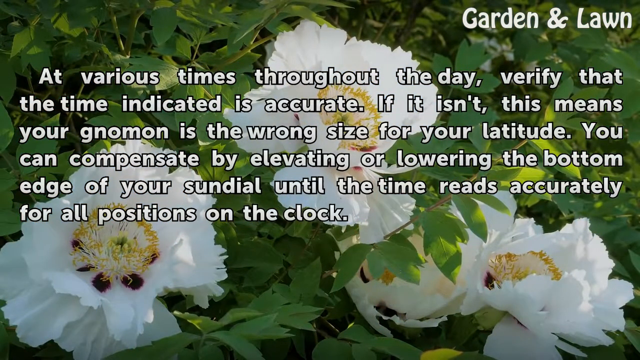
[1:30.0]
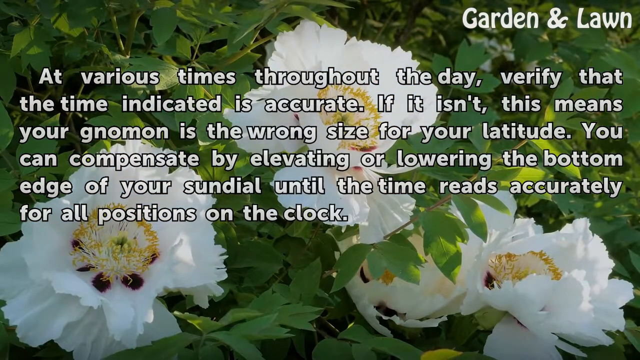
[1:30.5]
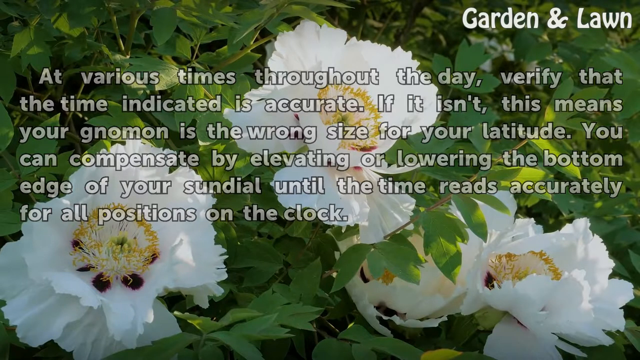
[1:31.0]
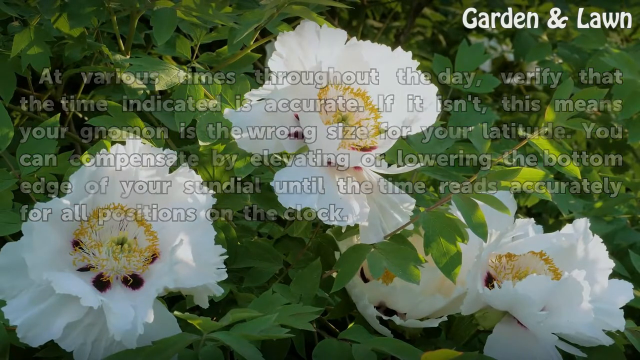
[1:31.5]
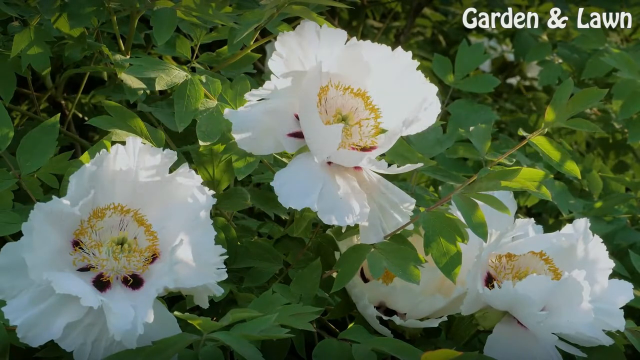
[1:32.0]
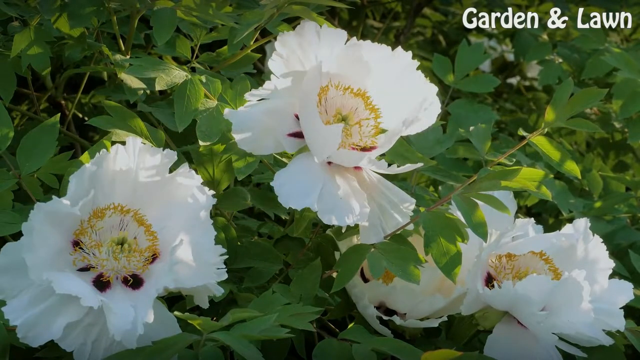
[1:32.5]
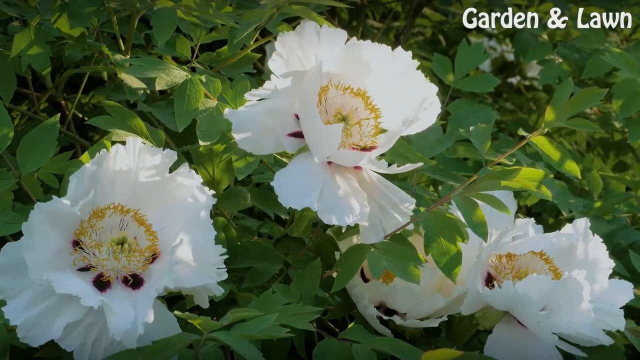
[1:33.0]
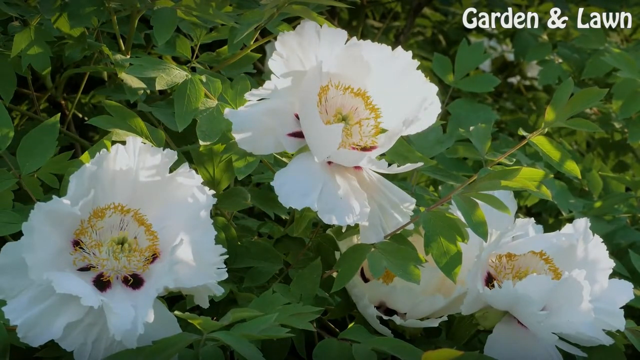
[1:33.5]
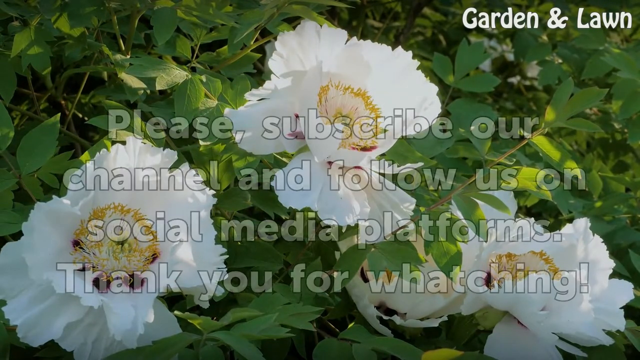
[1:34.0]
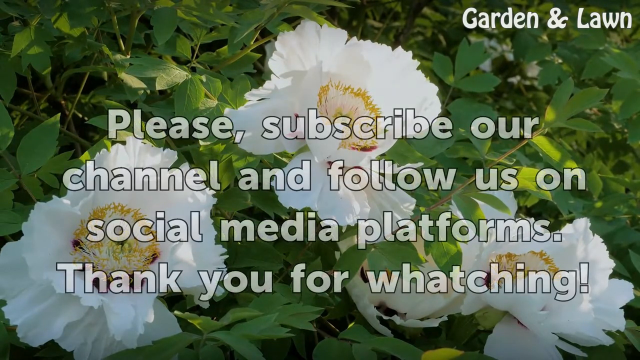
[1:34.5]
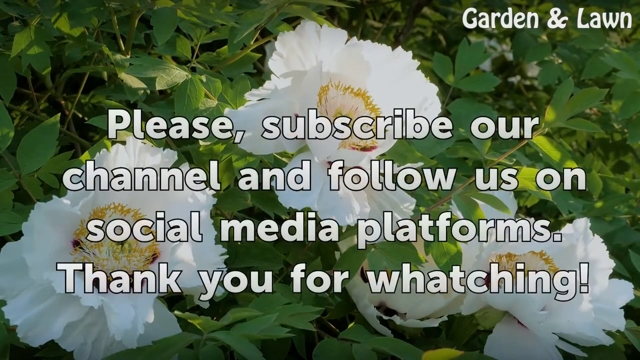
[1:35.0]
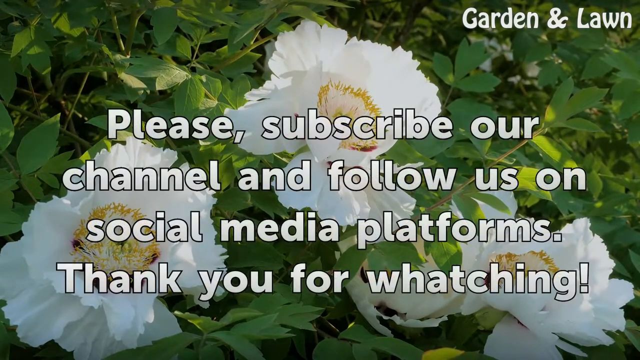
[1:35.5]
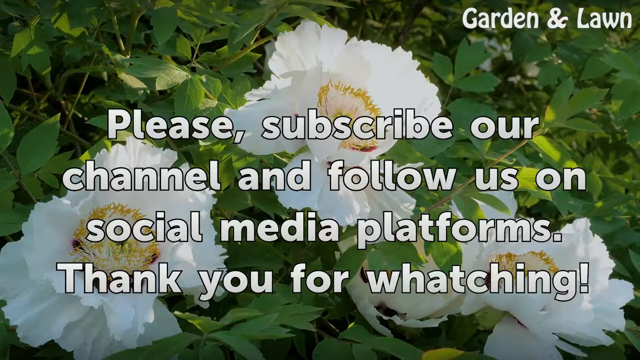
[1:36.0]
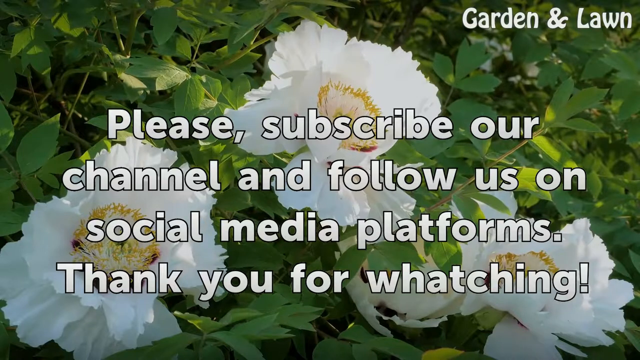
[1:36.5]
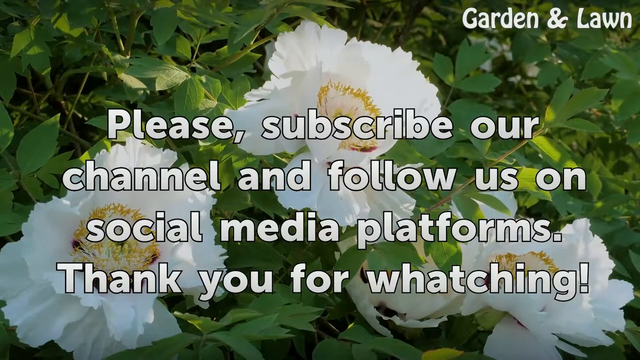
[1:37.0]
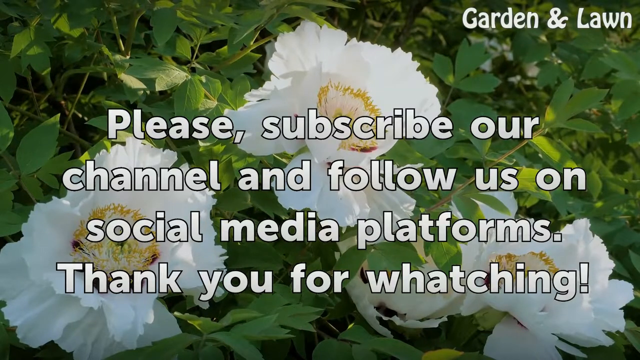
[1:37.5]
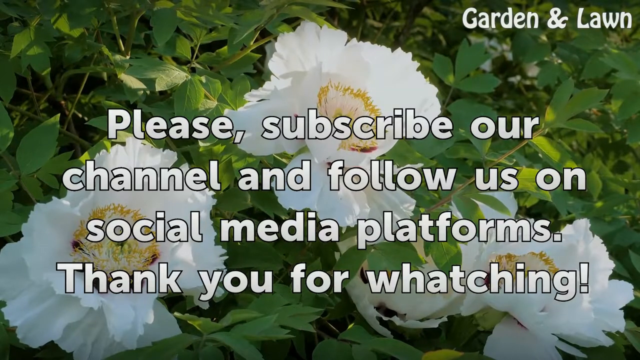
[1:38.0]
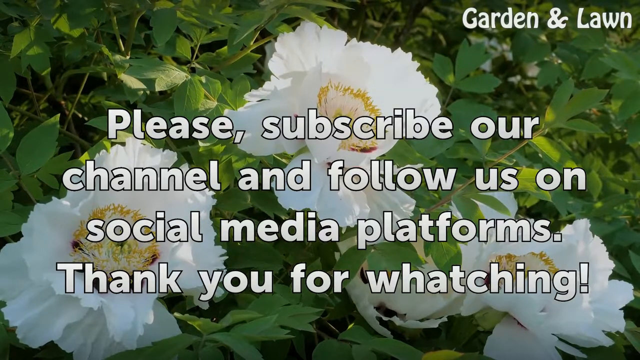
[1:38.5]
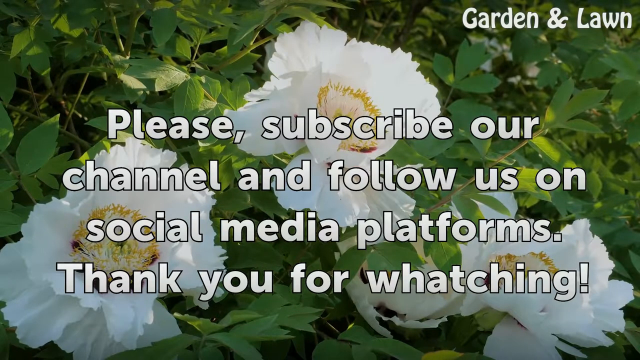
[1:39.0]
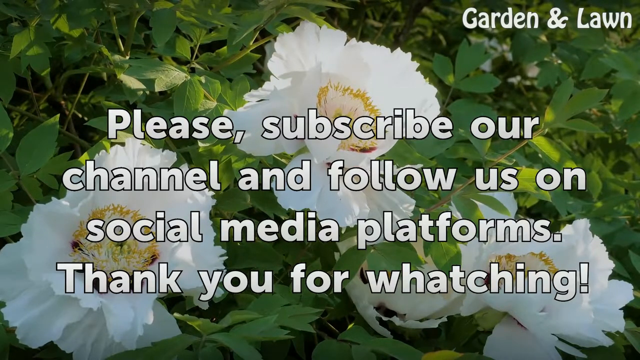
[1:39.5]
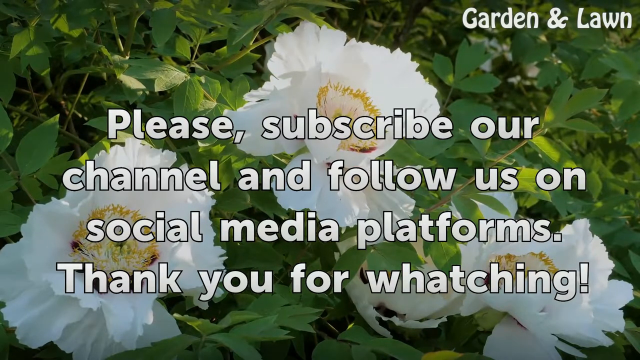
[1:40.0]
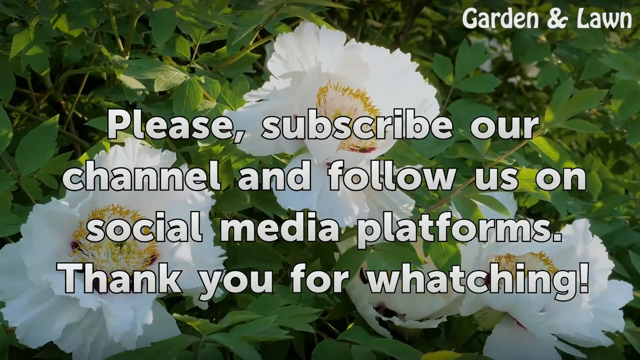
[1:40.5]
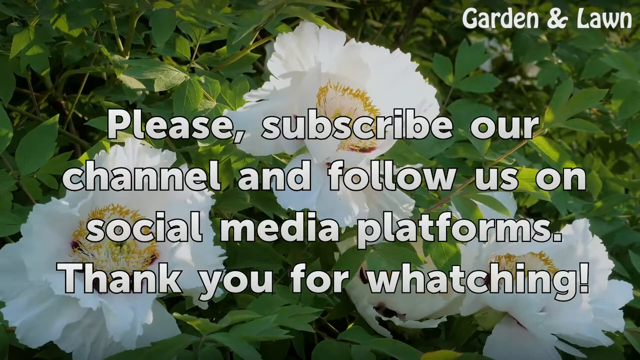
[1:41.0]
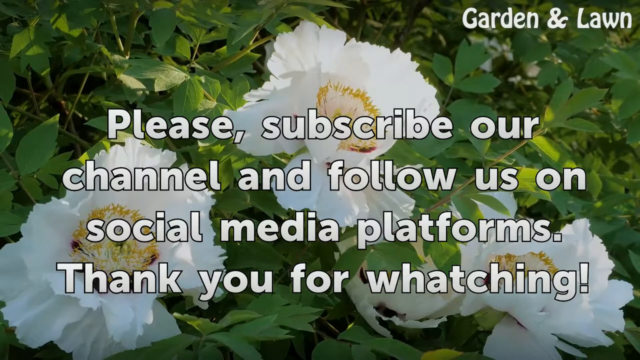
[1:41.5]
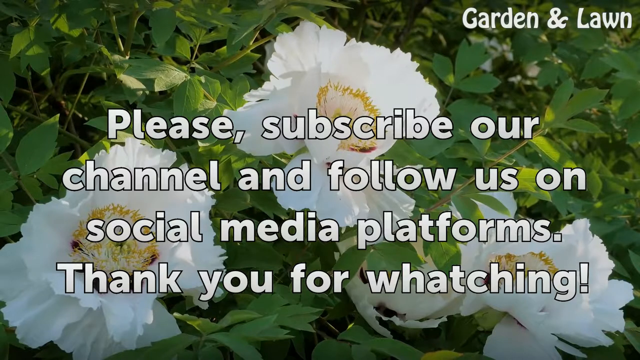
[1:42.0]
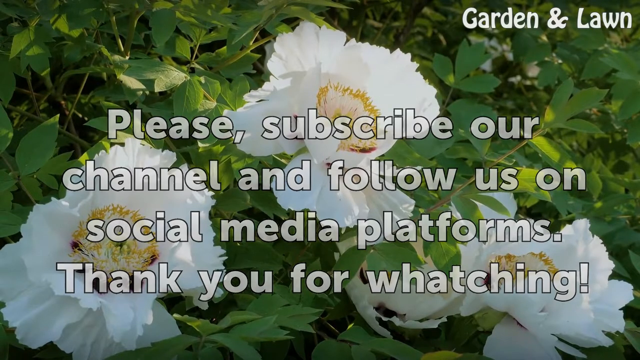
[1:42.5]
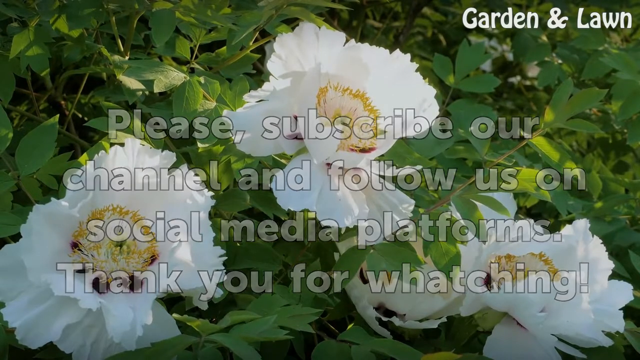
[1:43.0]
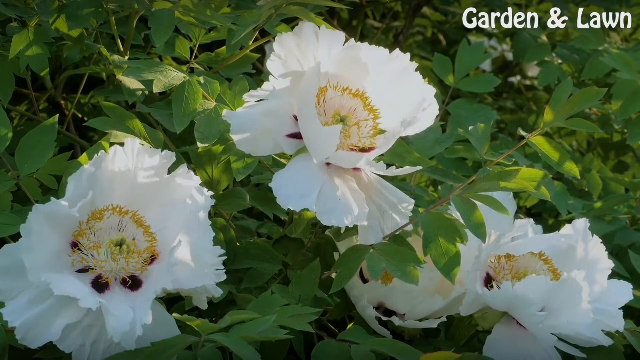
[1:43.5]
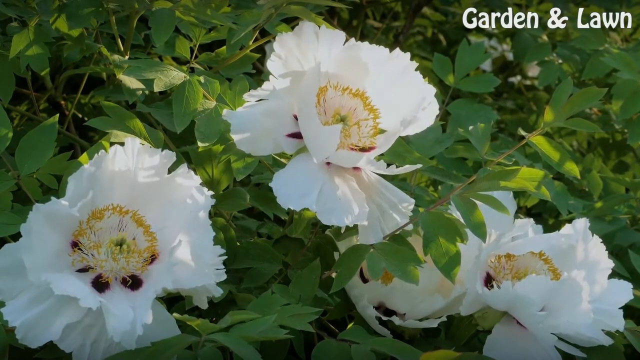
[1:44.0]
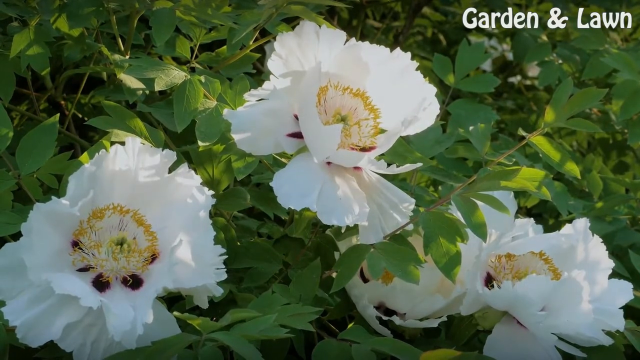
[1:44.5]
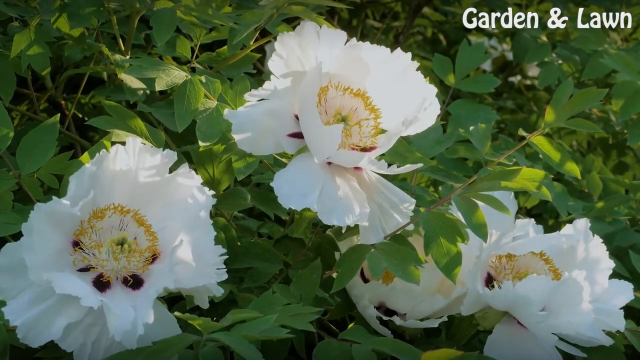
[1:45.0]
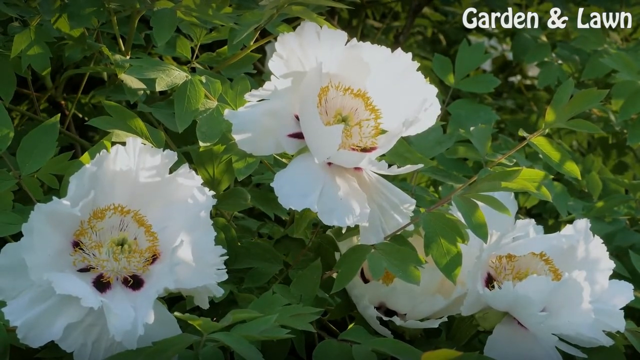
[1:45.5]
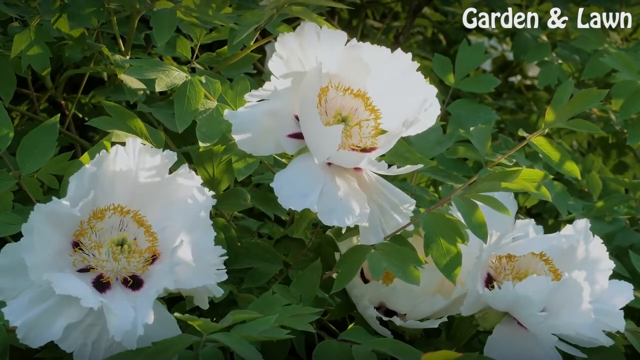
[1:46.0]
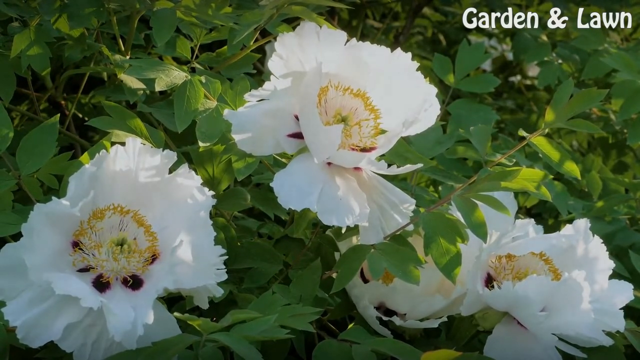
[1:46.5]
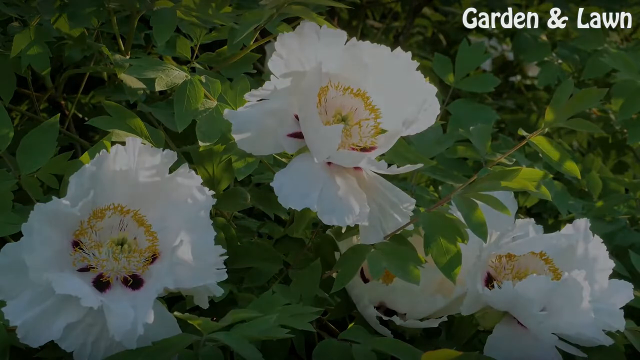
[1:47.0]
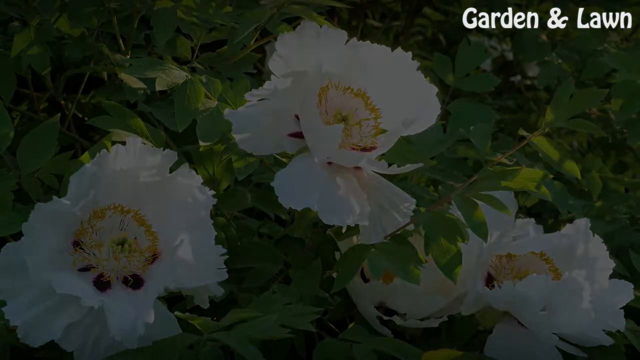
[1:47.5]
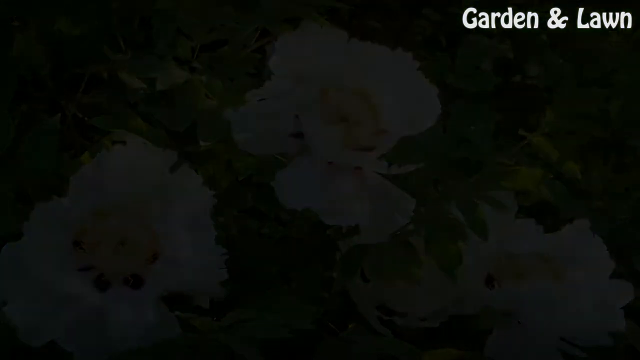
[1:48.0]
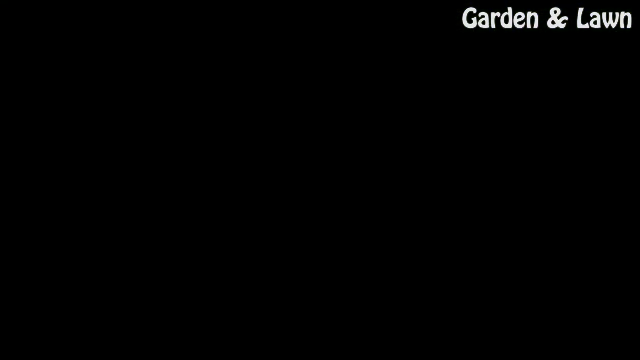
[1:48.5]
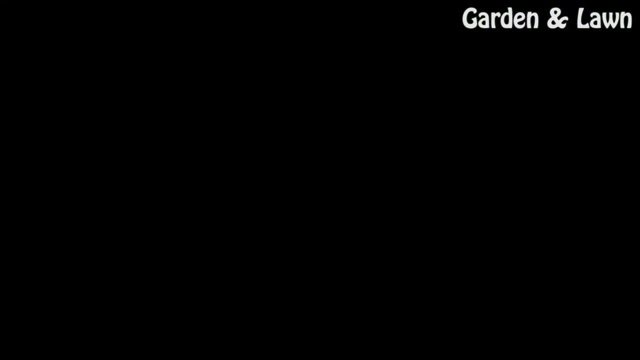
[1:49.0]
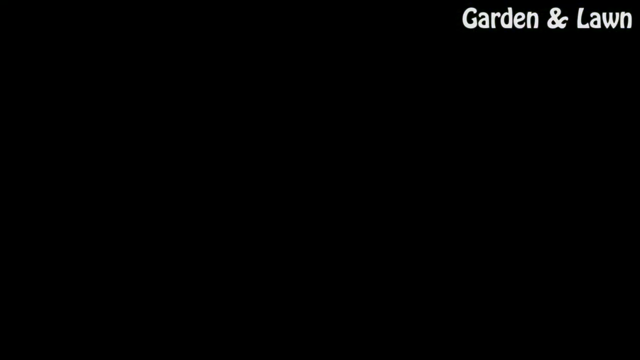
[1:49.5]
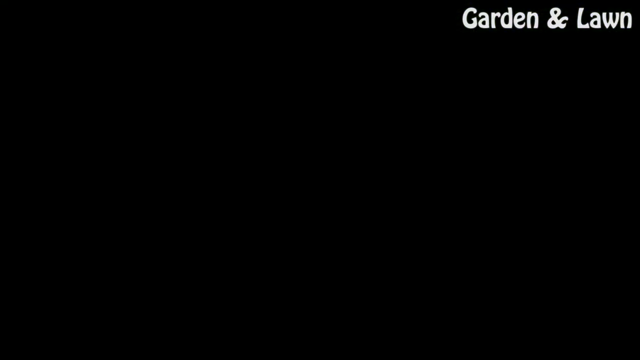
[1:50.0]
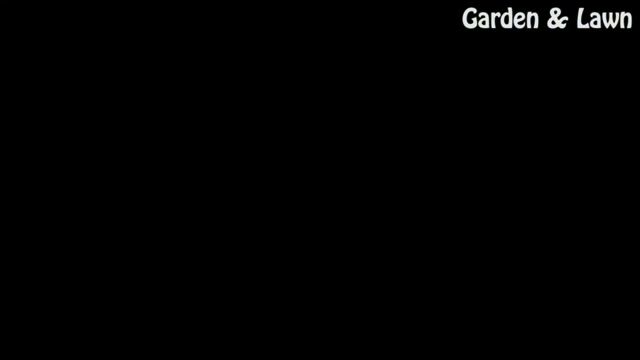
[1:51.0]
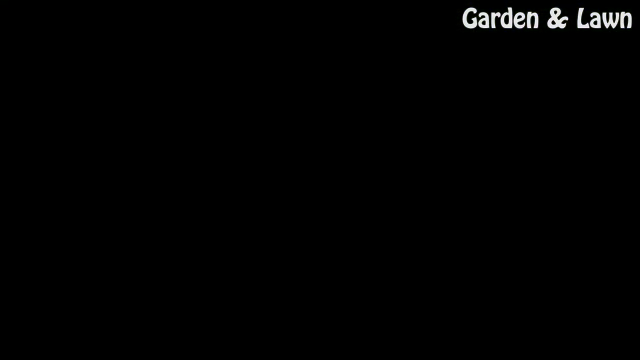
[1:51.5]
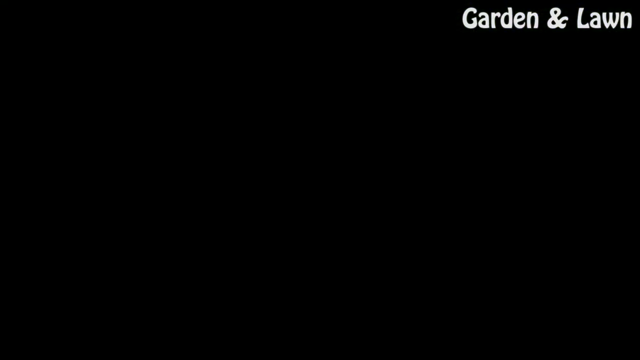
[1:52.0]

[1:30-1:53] Instructions read "Verify that the time indicator is accurate." If it is not, the blade is the wrong size for the latitude, and this can be compensated for by elevating or lowering the bottom edge of the sundial until the time reads accurately for all positions on the clock.